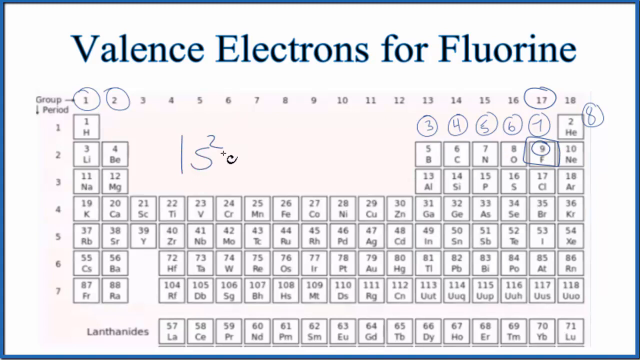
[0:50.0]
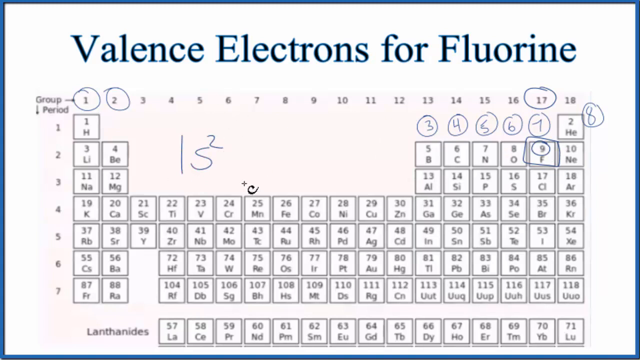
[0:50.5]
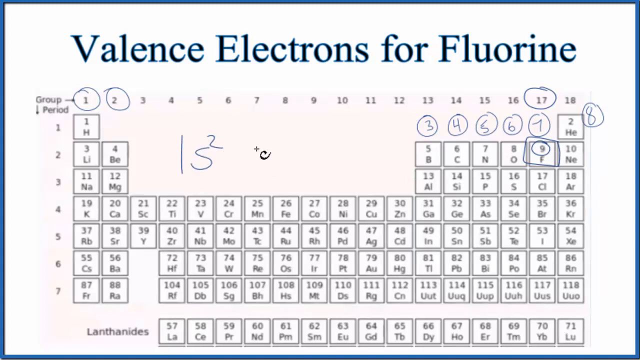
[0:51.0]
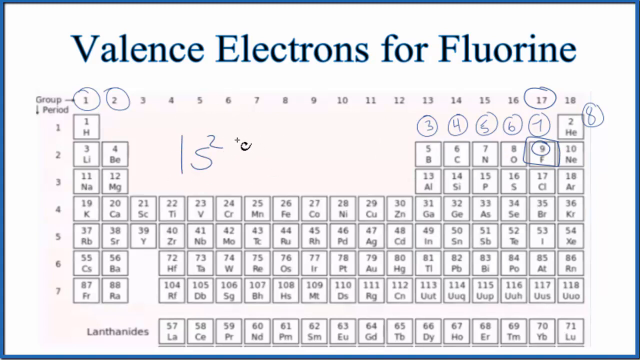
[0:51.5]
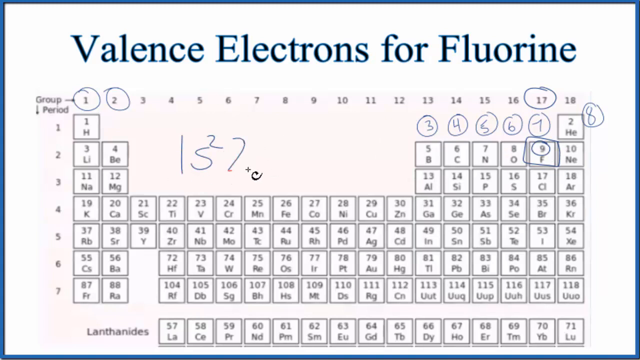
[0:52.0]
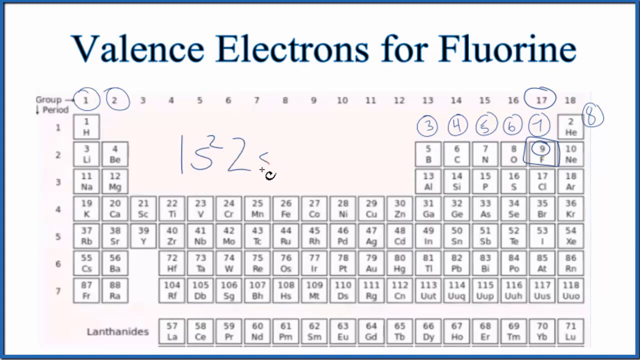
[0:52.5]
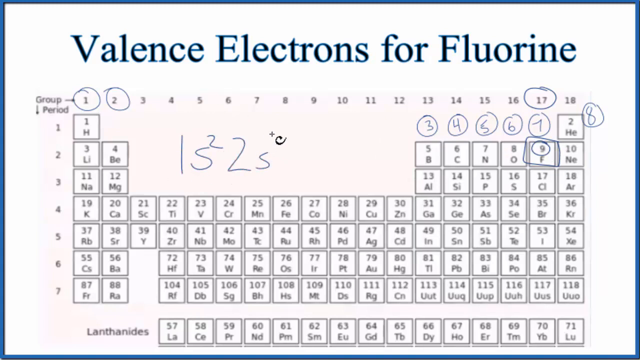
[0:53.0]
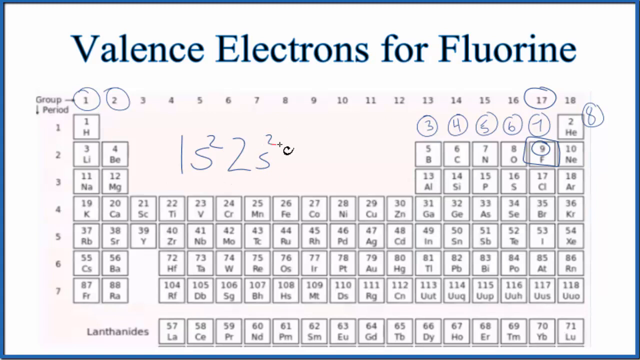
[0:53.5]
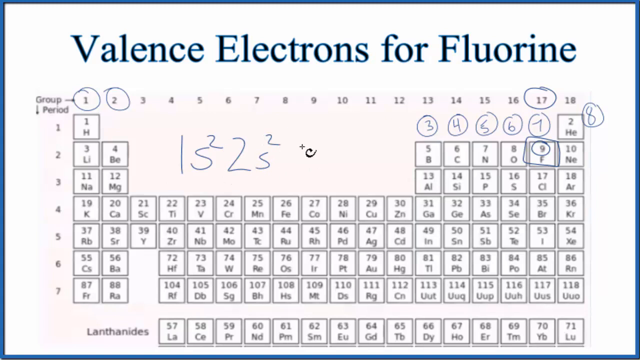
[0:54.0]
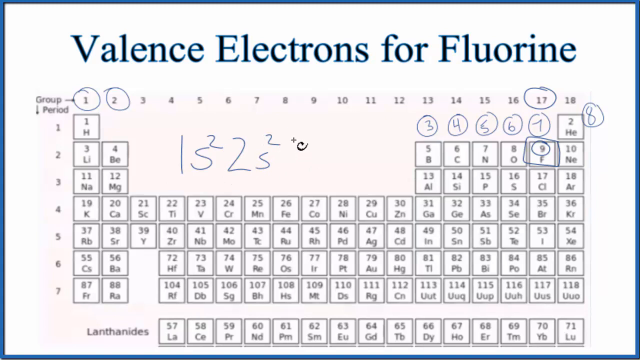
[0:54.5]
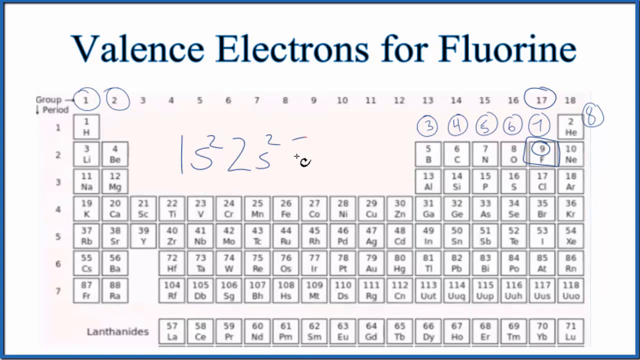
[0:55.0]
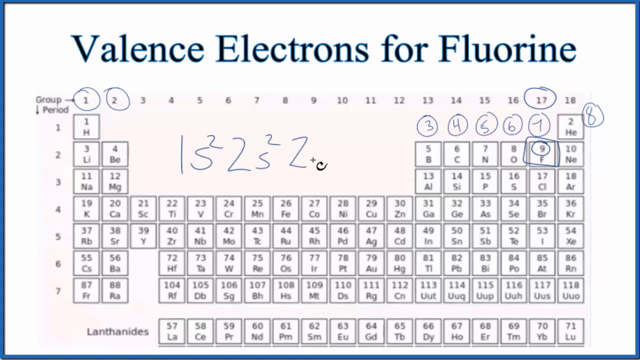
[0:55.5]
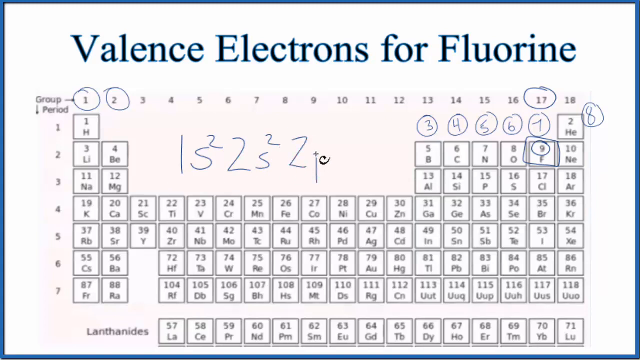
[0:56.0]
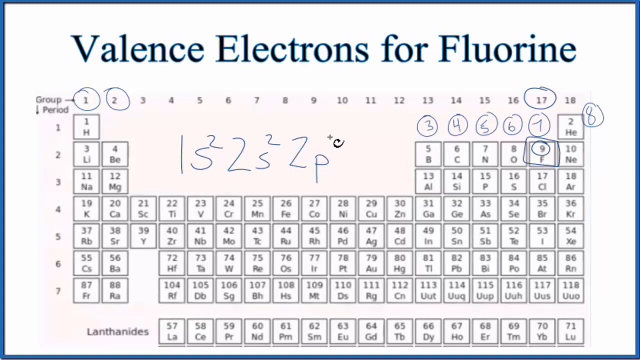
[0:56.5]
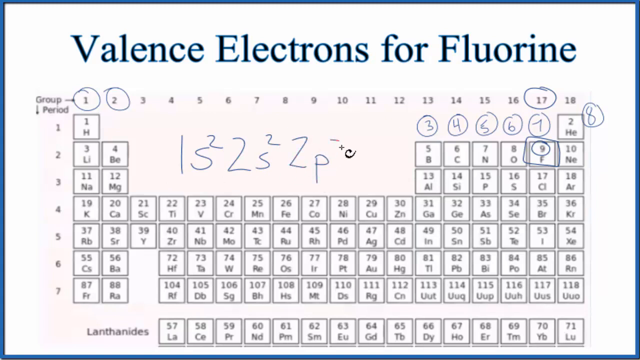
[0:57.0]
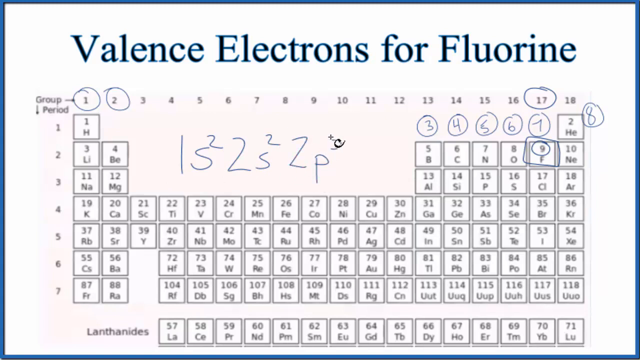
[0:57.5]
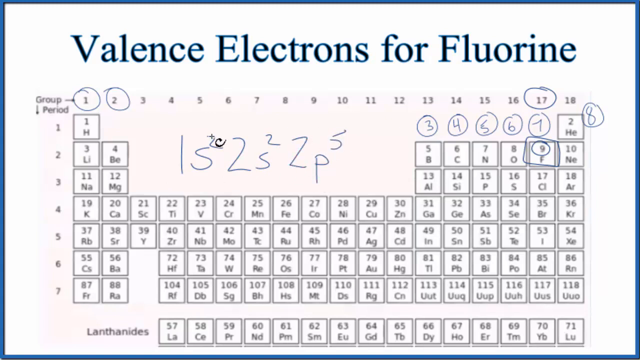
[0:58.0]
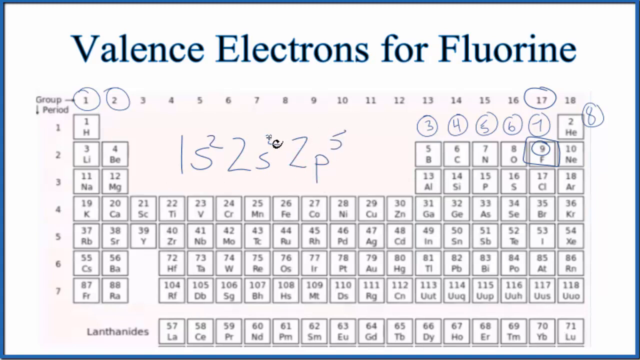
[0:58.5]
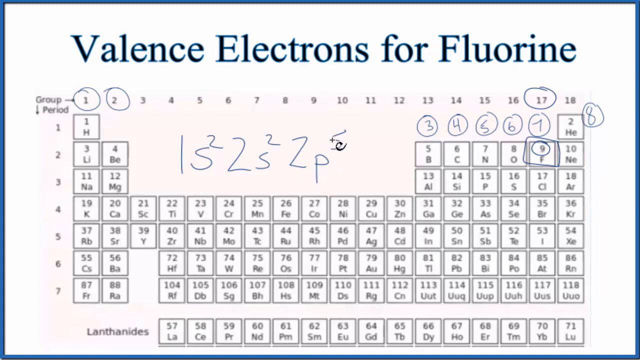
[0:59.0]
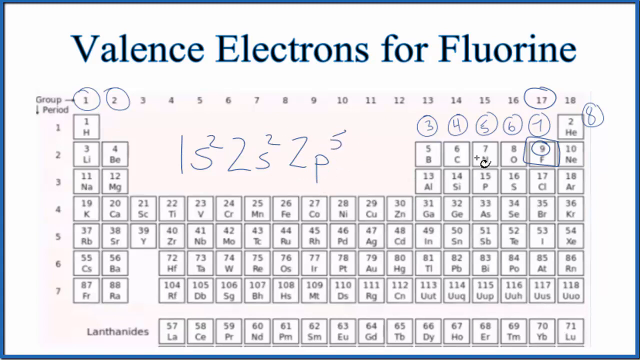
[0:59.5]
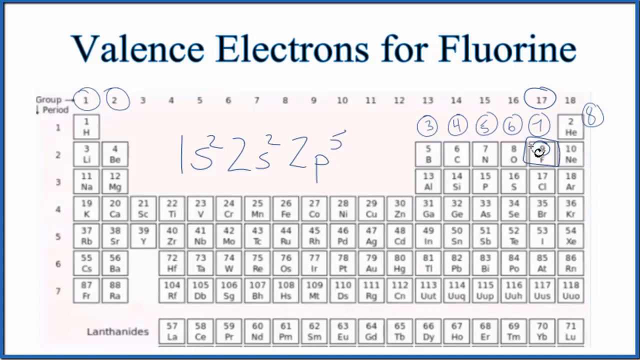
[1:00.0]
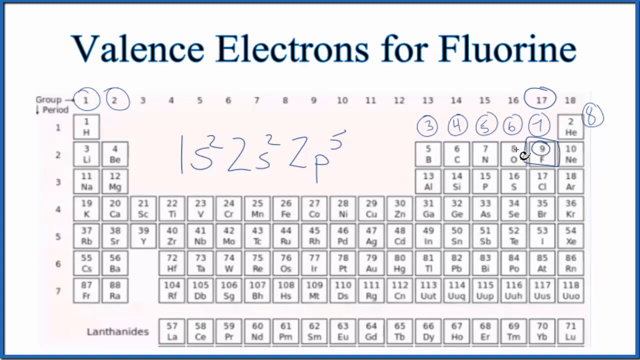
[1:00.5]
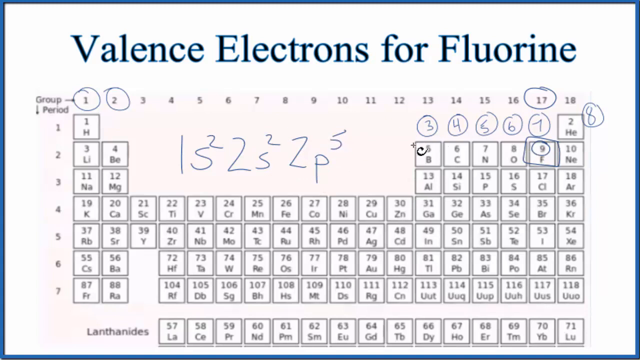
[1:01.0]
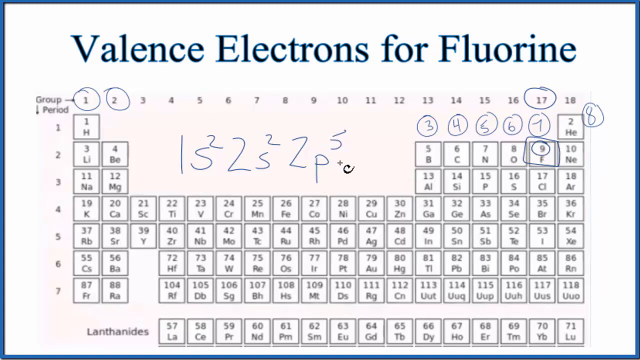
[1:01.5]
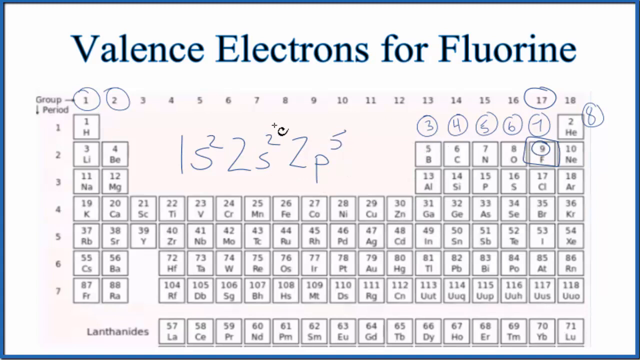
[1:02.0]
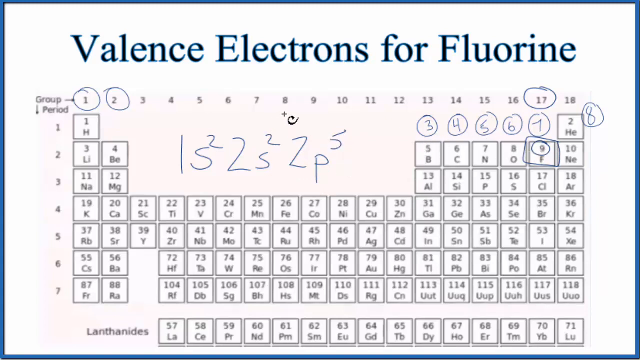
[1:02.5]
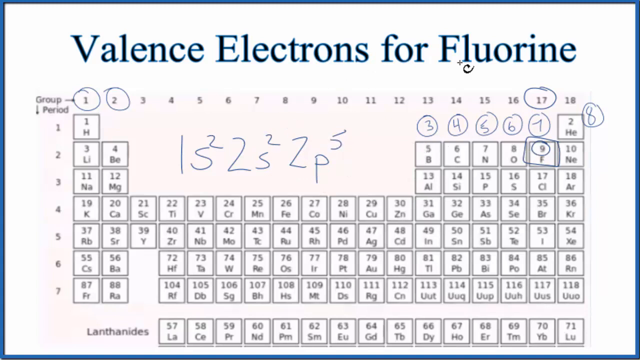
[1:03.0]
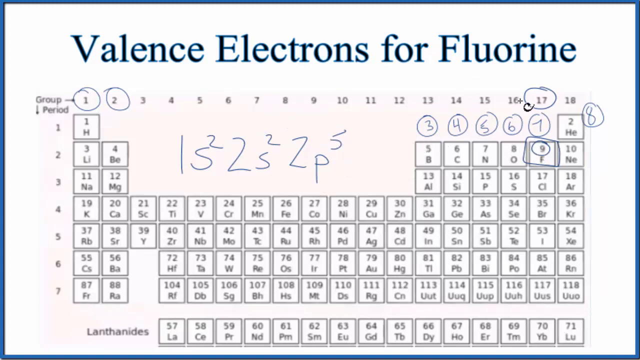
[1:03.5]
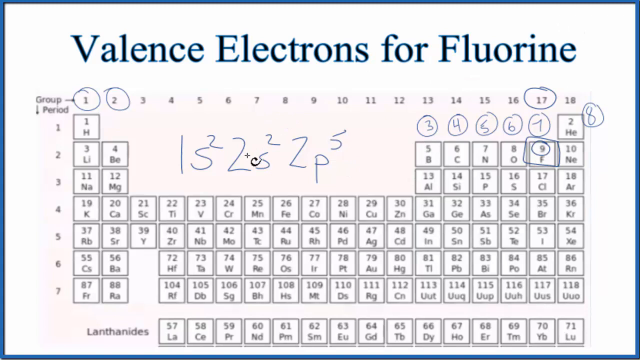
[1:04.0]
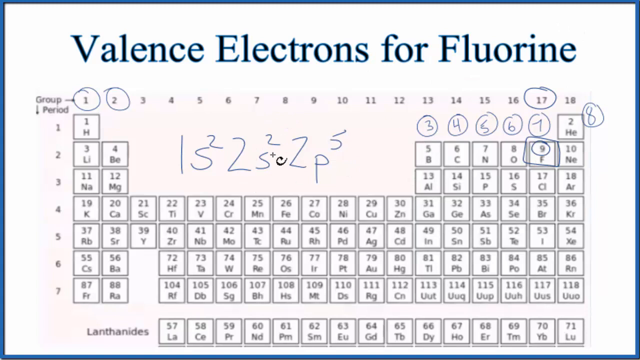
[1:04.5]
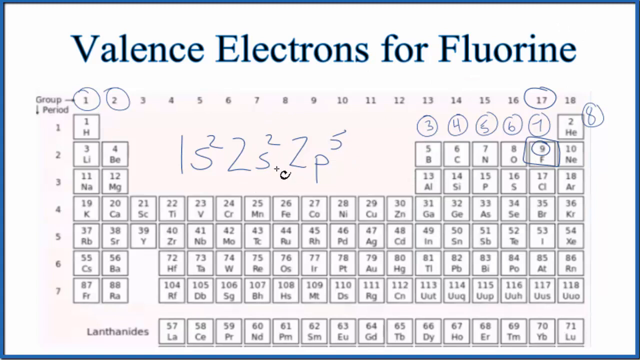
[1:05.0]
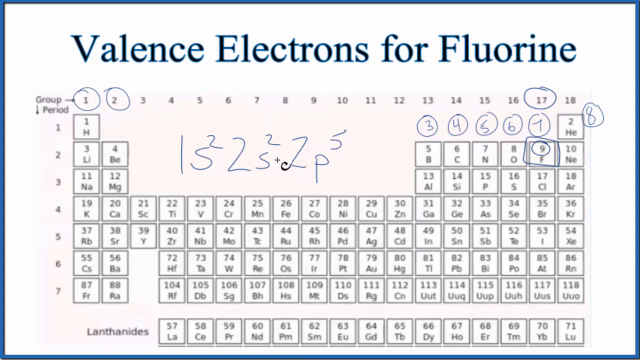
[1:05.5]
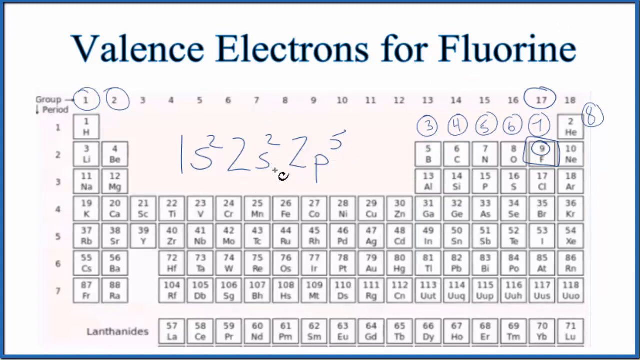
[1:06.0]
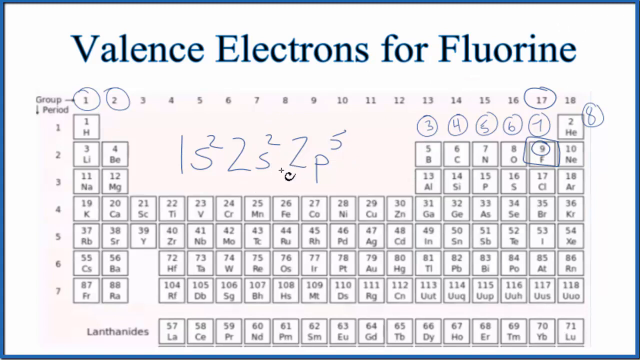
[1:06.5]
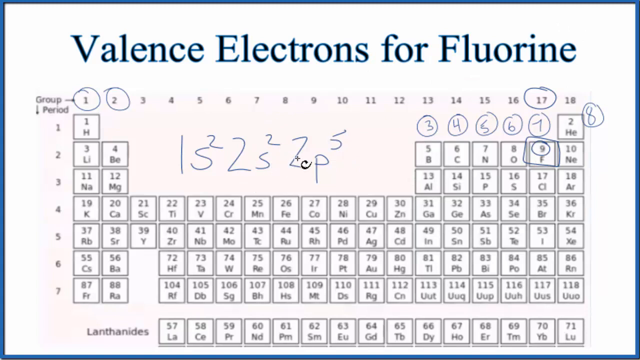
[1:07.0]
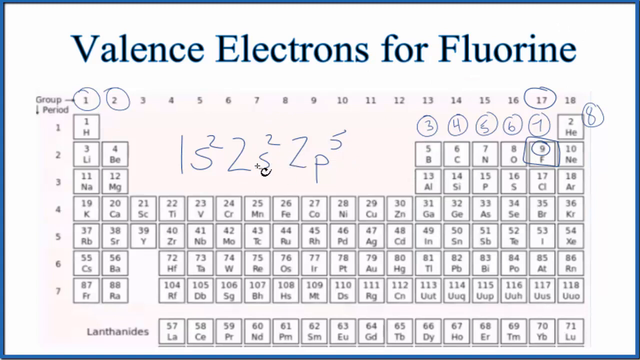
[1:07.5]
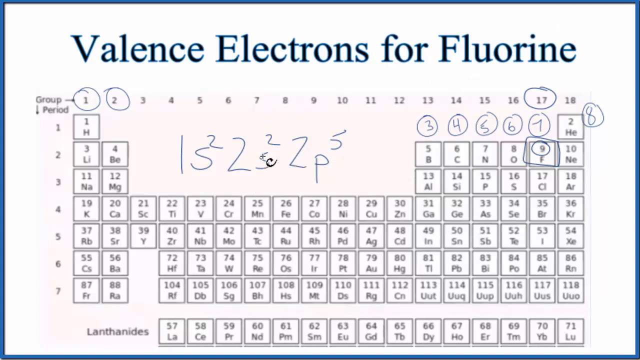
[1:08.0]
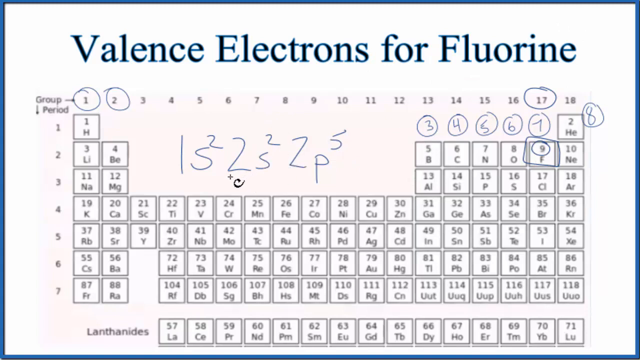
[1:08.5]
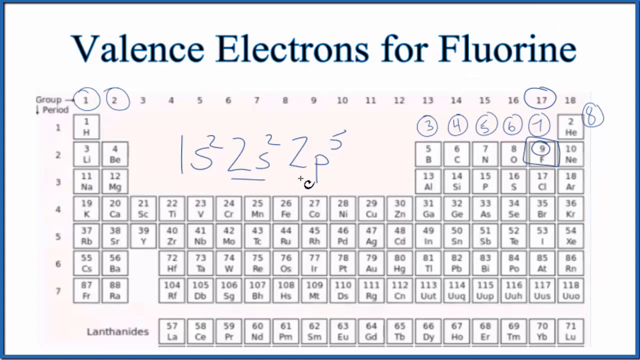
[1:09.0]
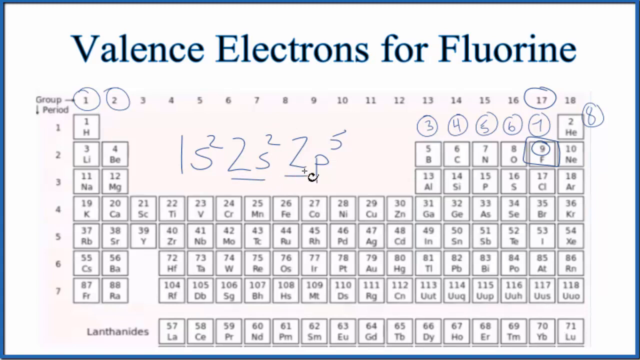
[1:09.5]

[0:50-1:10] The writing in the center of the screen appears to be a one and then a five, with what looks like a two over the five. A two is drawn over the second s, then a z and a p, with a five put over the p. The writing may possibly be the valence of various elements, but it is hard to tell. The instructor then highlights the number two they wrote by rotating the mouse and circling it.